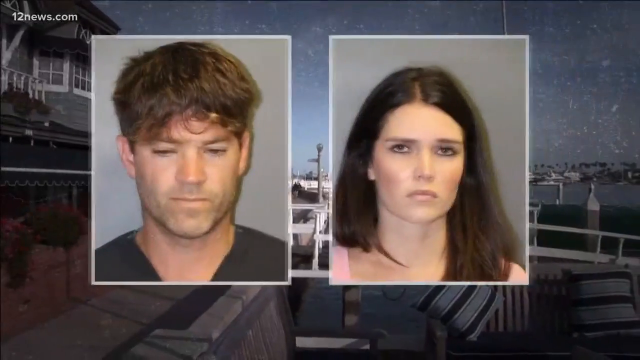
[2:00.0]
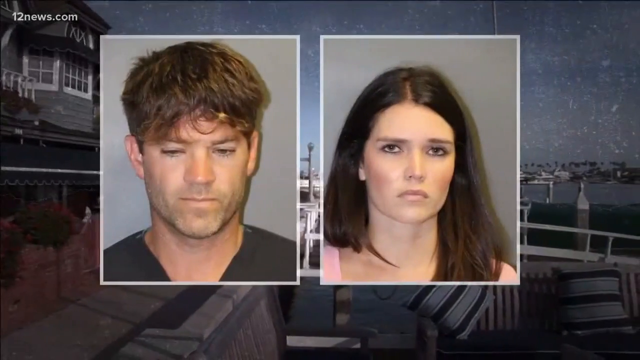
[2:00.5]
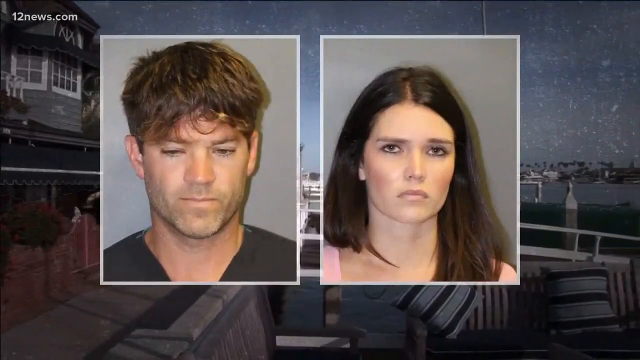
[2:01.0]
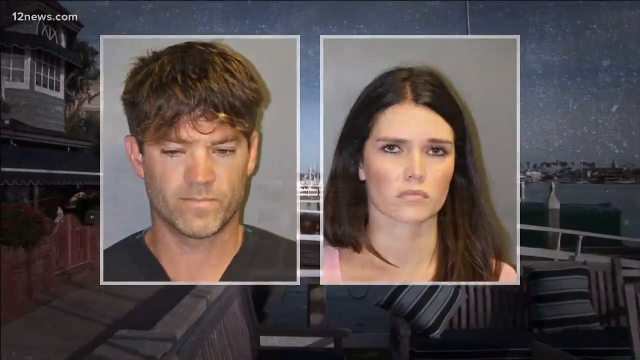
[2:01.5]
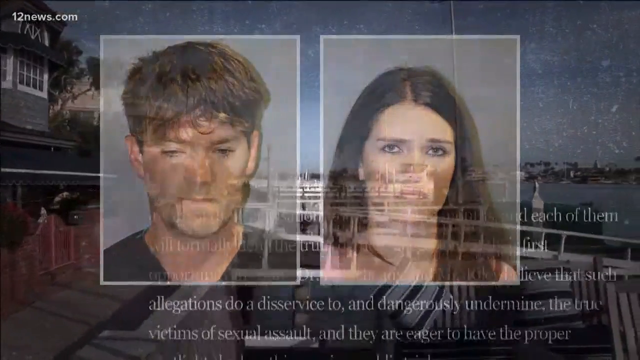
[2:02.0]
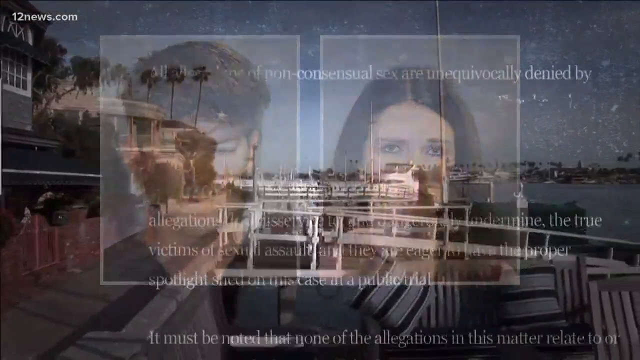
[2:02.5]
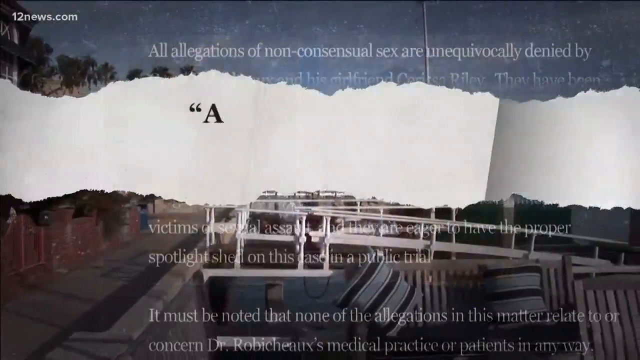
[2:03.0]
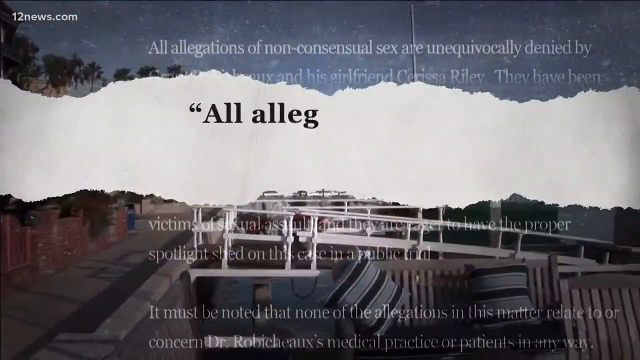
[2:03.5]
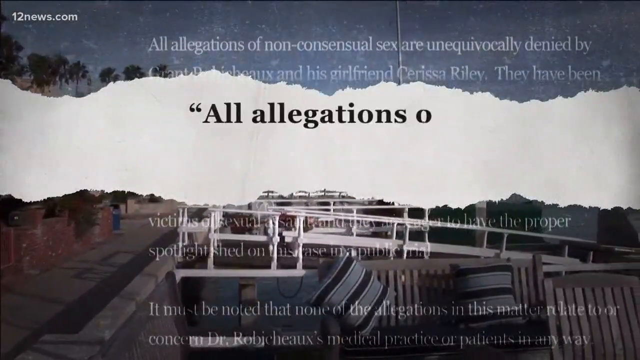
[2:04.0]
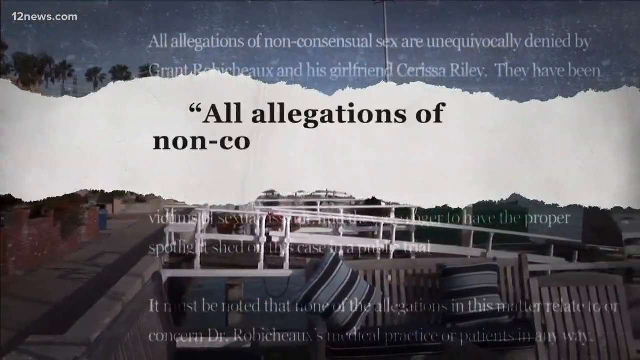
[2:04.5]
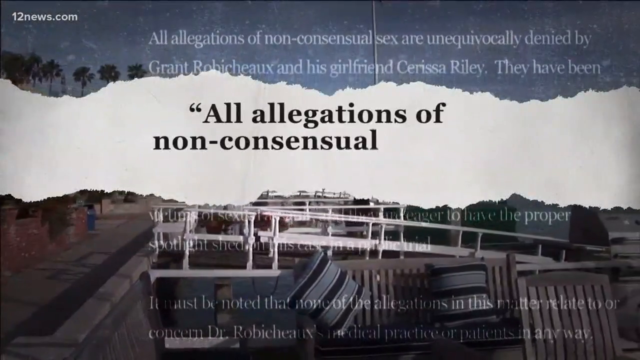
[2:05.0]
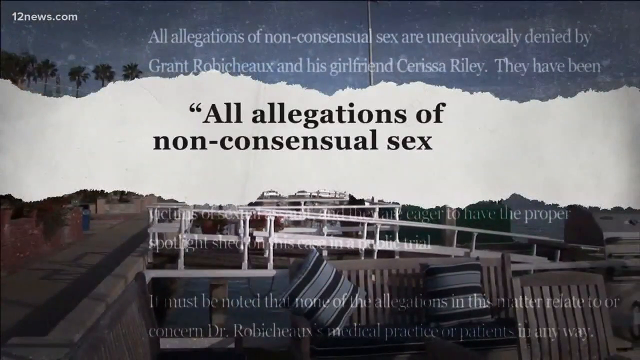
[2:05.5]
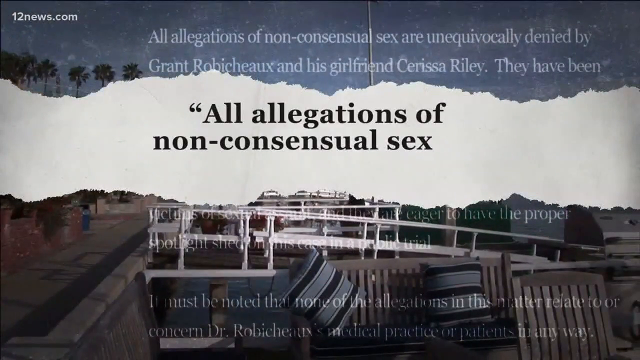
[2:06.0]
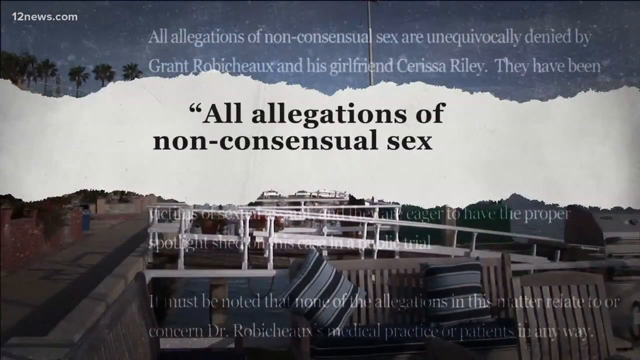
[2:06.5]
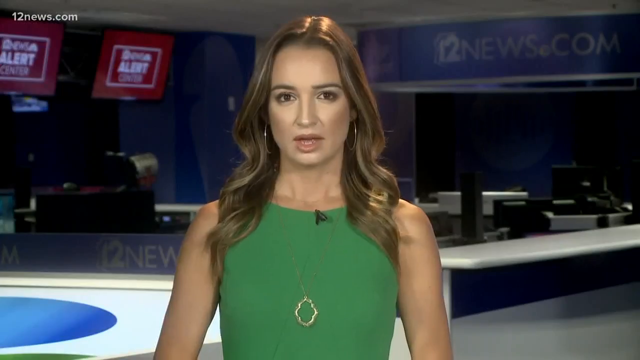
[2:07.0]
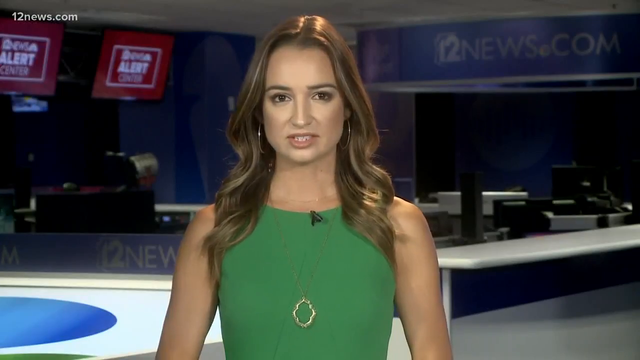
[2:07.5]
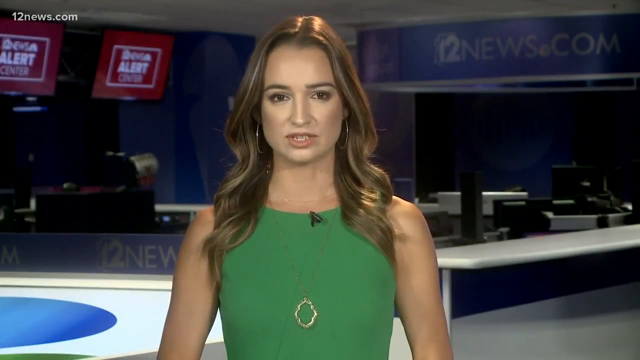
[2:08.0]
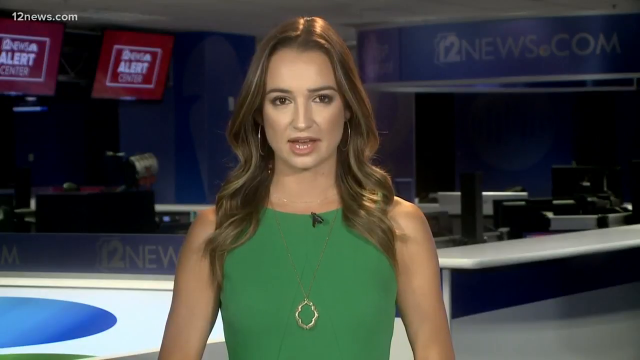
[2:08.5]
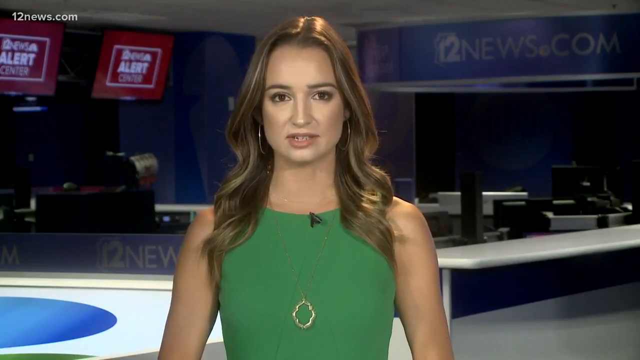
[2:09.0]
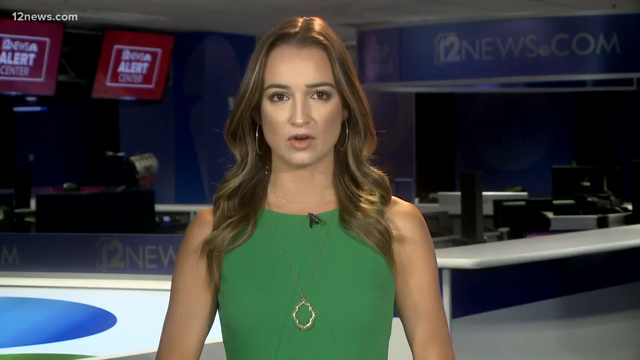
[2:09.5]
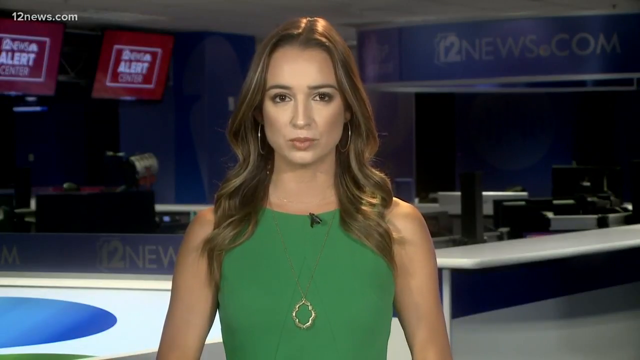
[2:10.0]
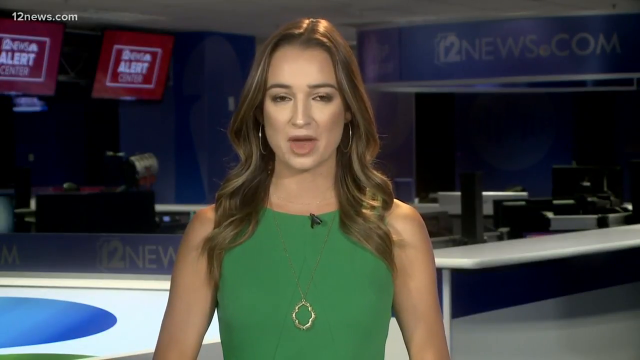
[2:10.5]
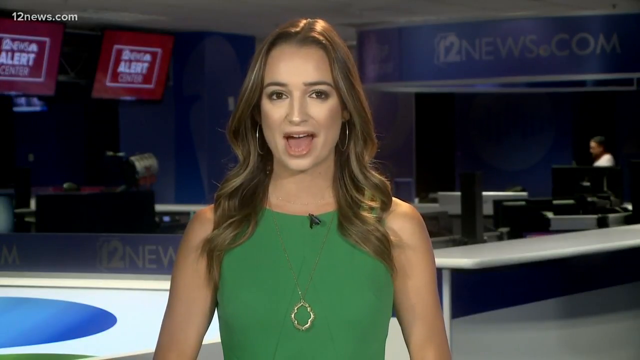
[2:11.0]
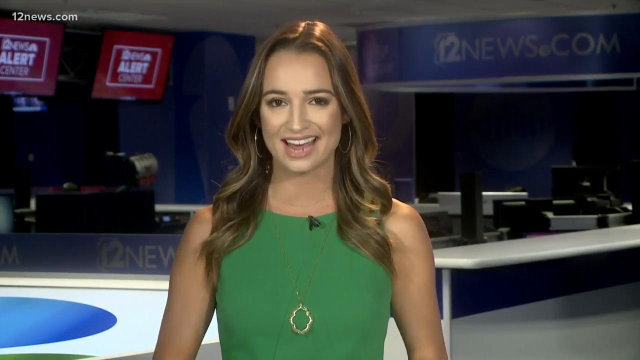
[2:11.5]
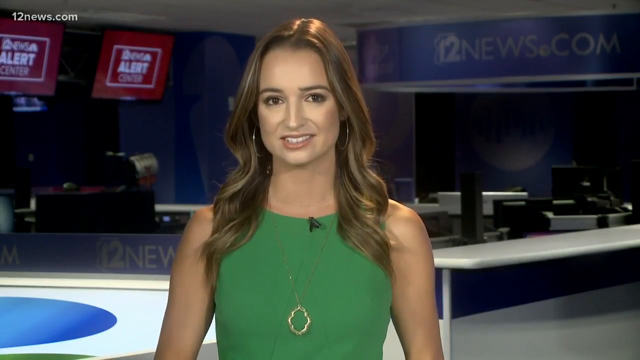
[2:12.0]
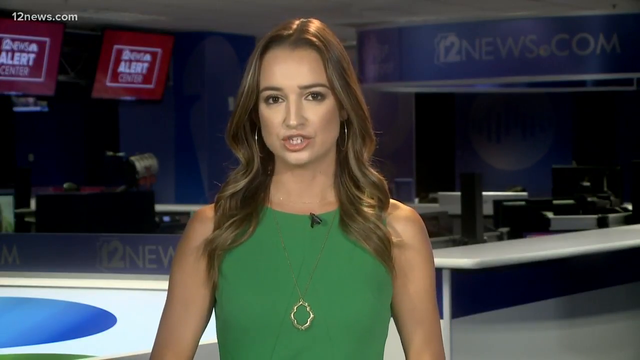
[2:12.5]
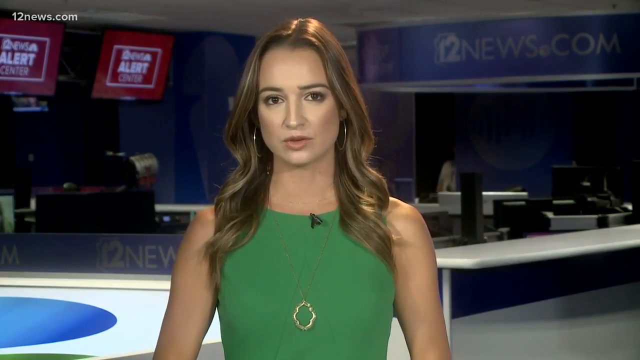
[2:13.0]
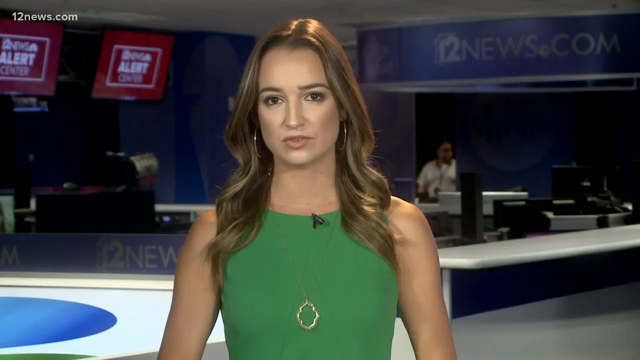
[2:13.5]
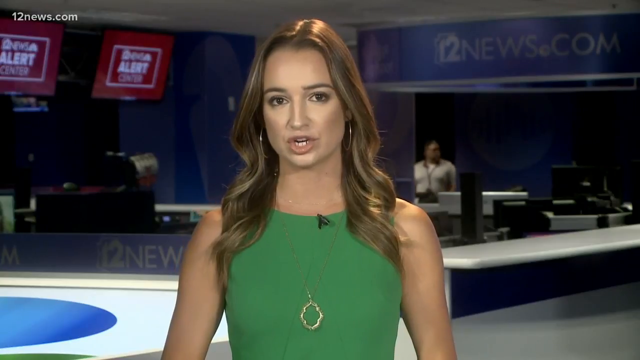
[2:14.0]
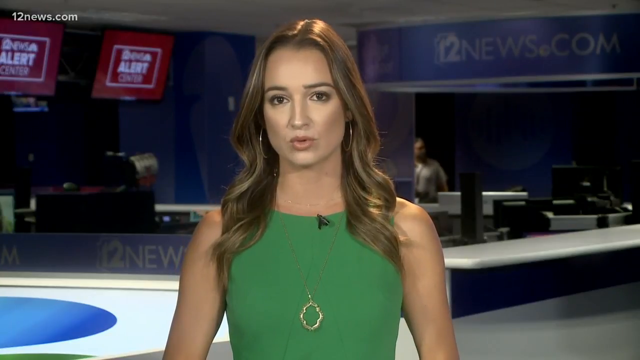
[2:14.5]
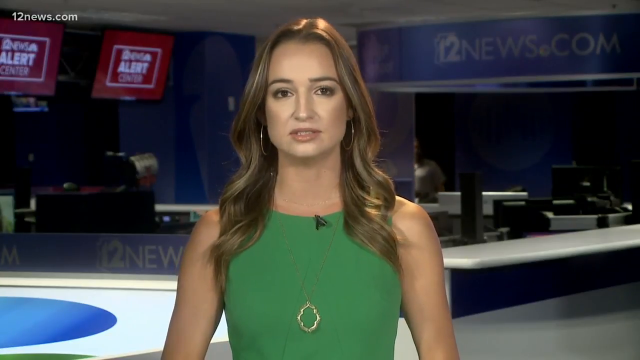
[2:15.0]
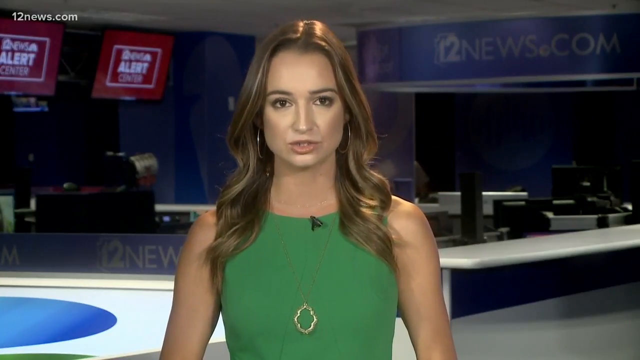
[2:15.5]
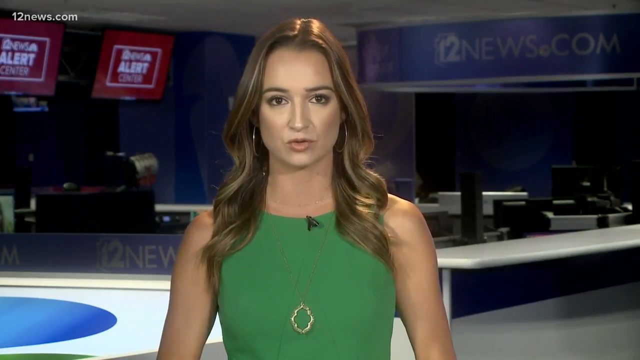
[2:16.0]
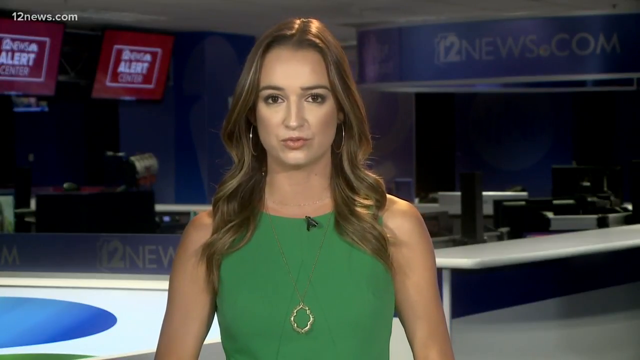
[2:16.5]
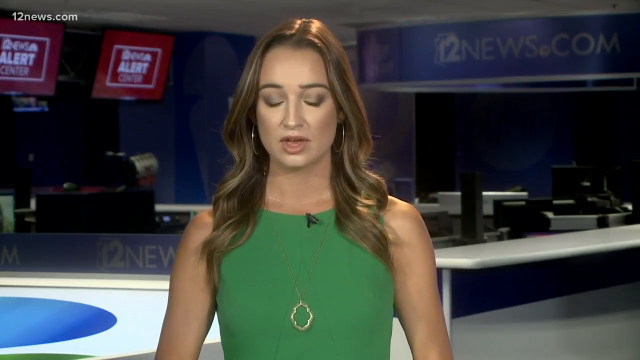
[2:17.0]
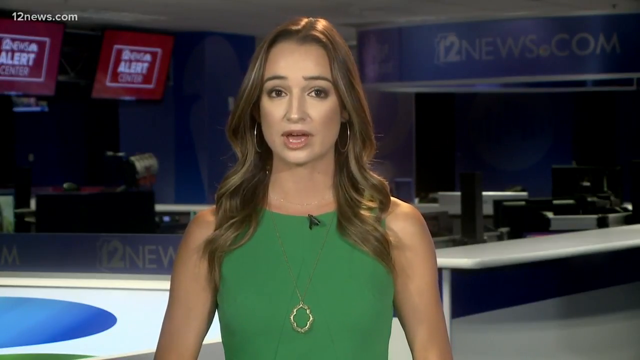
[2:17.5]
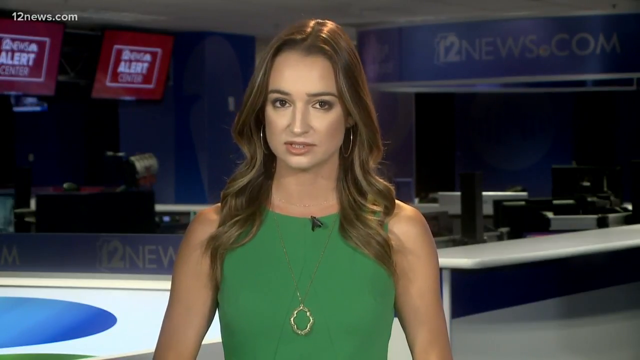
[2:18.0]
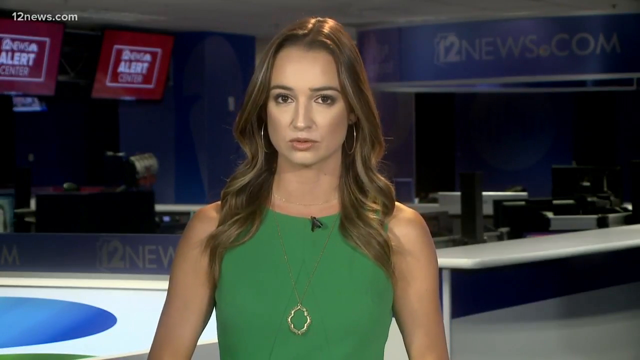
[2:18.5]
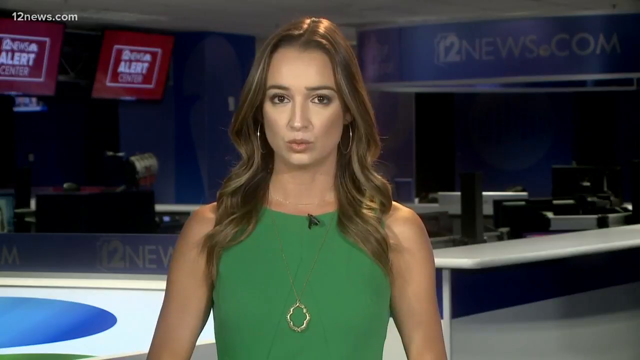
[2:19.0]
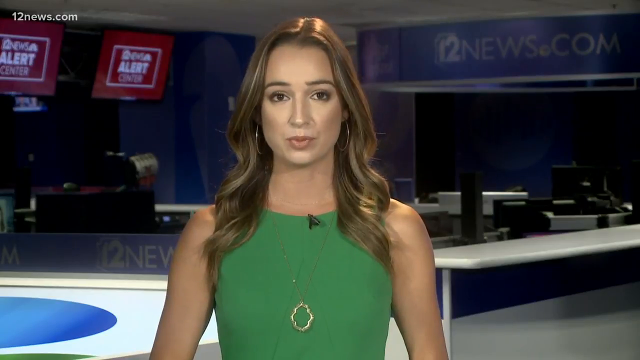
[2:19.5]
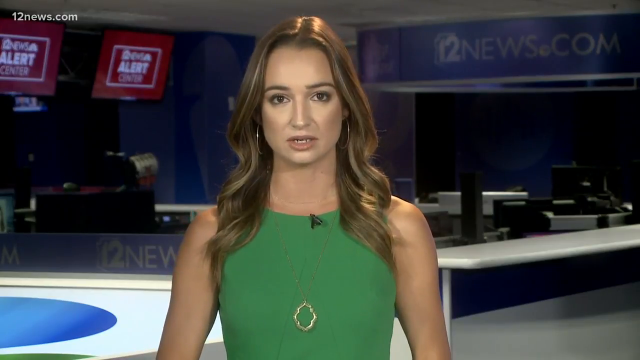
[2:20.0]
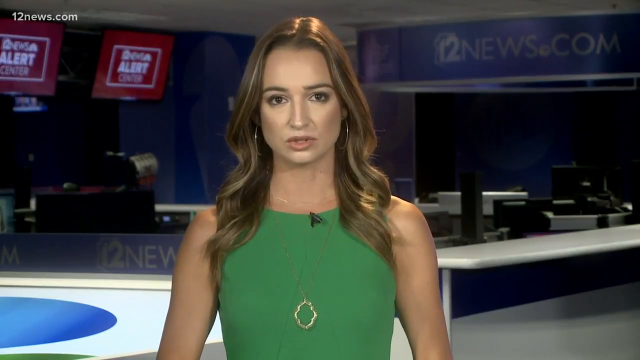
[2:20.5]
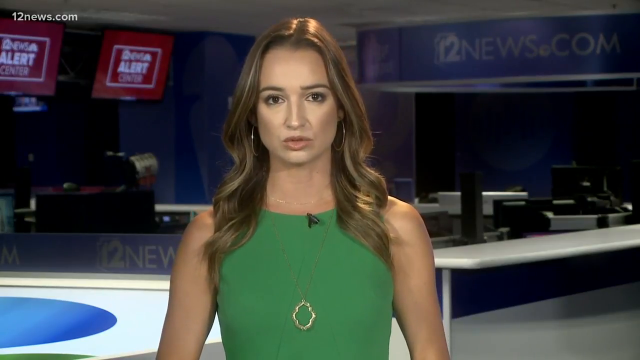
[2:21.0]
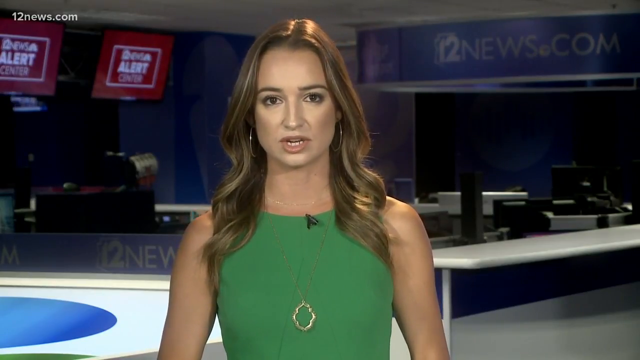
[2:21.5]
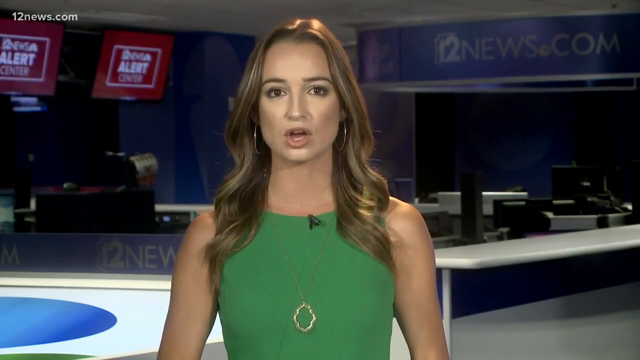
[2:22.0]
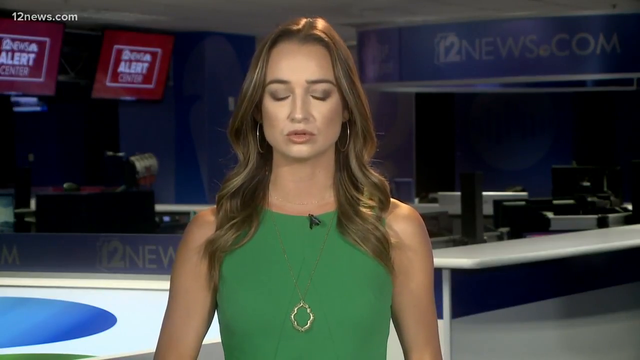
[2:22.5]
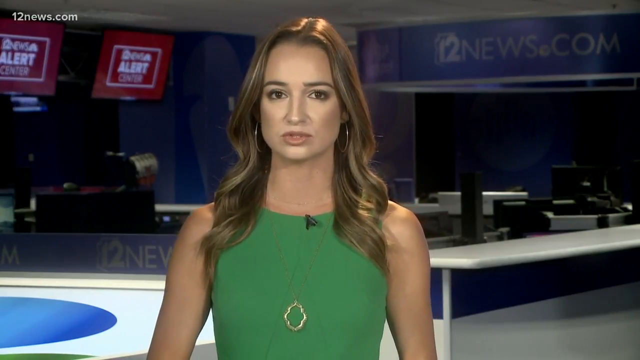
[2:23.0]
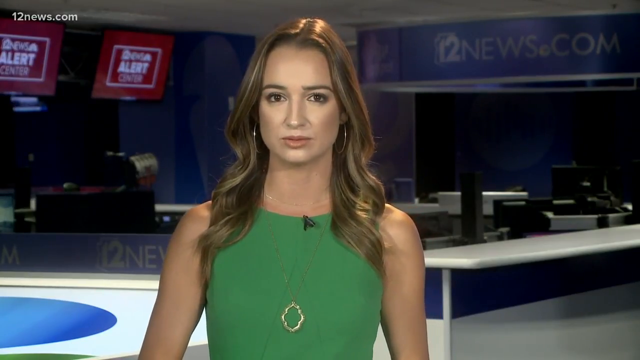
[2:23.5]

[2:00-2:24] The mug shots of the man and woman are shown again, the man on the left and the woman on the right. She wears pink, has brownish hair and does not look happy in the camera; the man, with brownish hair, looks kind of down. Behind them is the picture of buildings, a beach and some boats, looking like morning or evening. Writing pops up in black lettering against a white background, beginning "All allegations of". The video returns to a reporter in a green dress in the newsroom, with "12 news.com" in the background and red on the left side on two monitors. The area has a lot of blue and black, with a little white on the tables. The woman speaking has round earrings and longish brownish hair. Then the video ends.